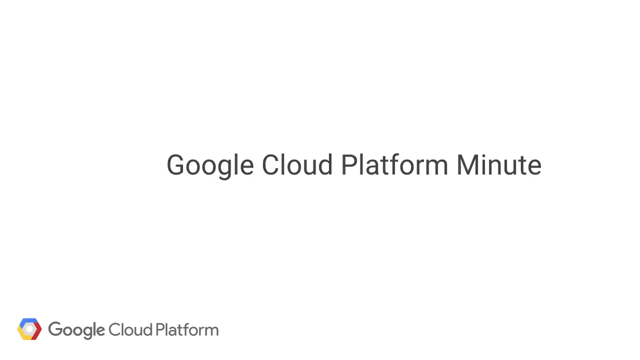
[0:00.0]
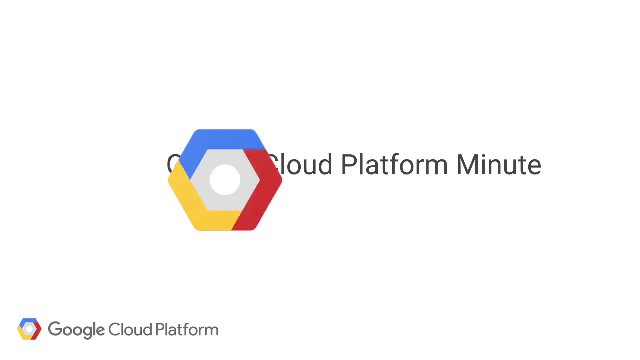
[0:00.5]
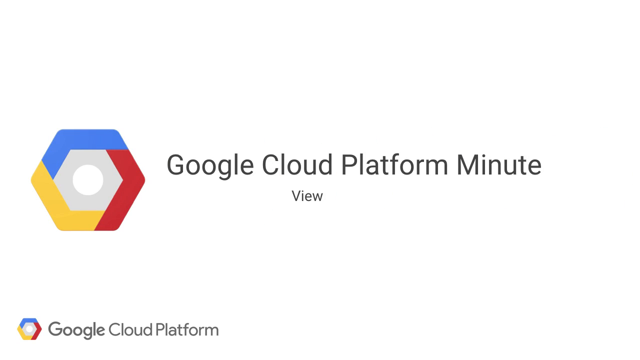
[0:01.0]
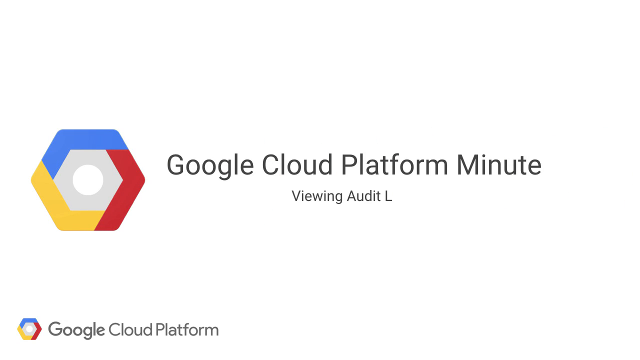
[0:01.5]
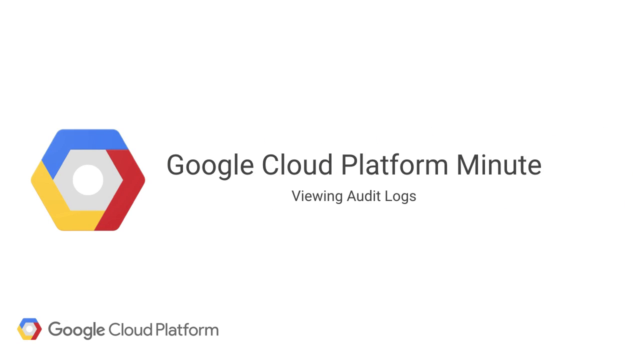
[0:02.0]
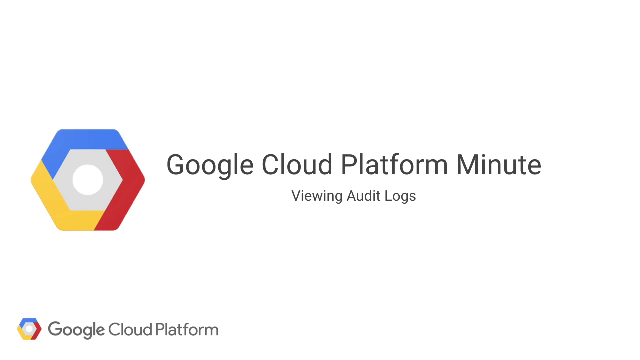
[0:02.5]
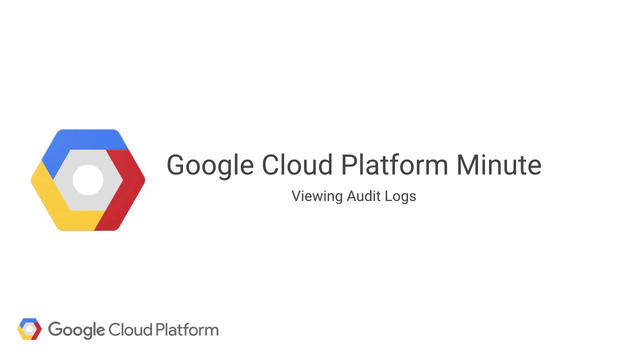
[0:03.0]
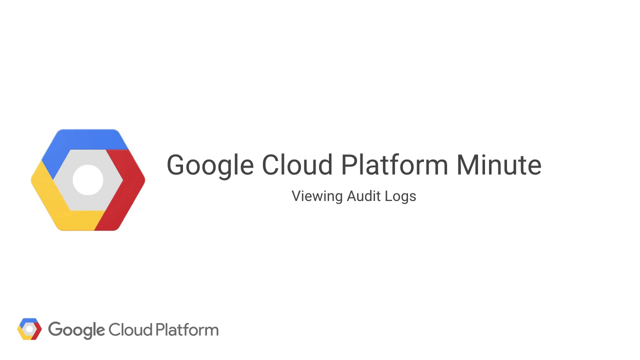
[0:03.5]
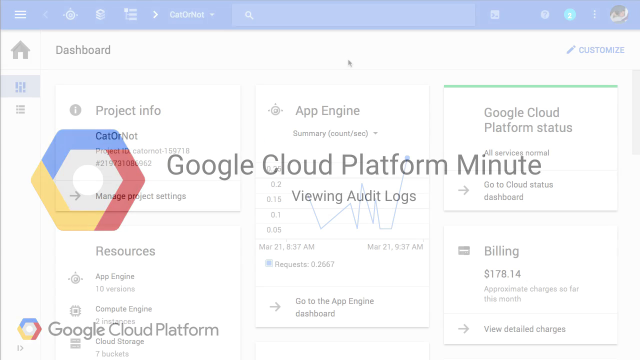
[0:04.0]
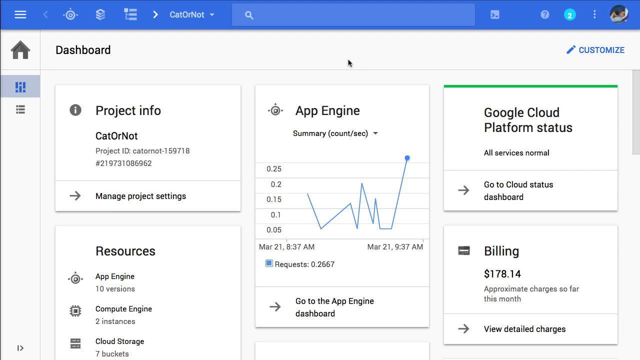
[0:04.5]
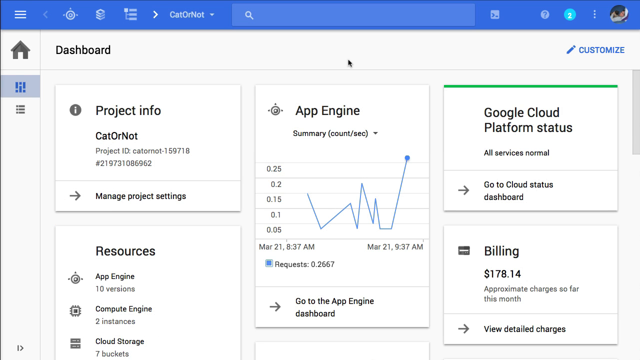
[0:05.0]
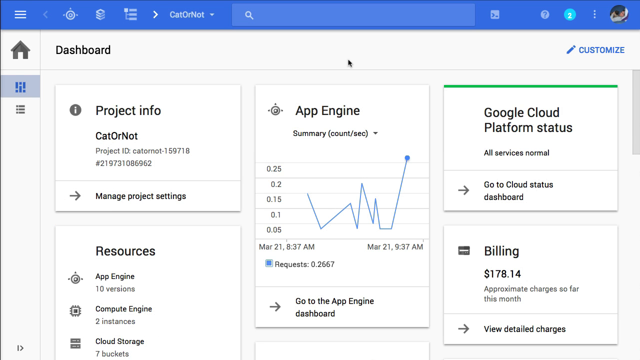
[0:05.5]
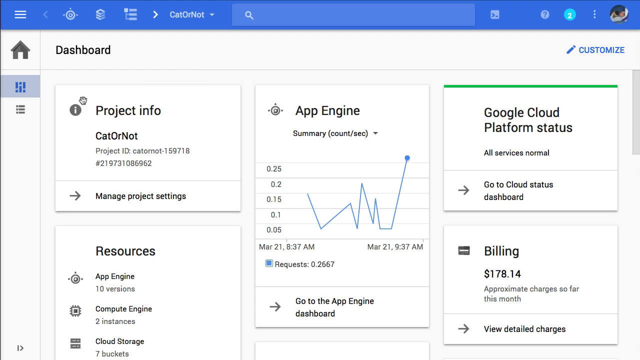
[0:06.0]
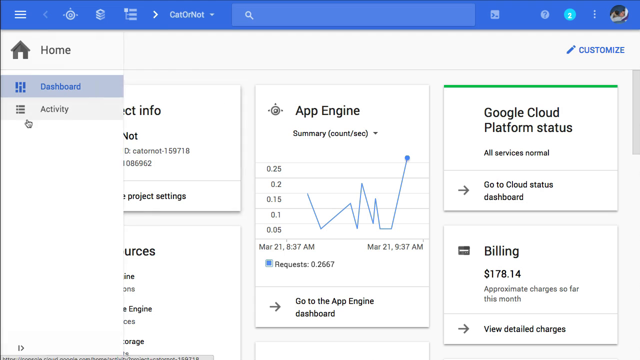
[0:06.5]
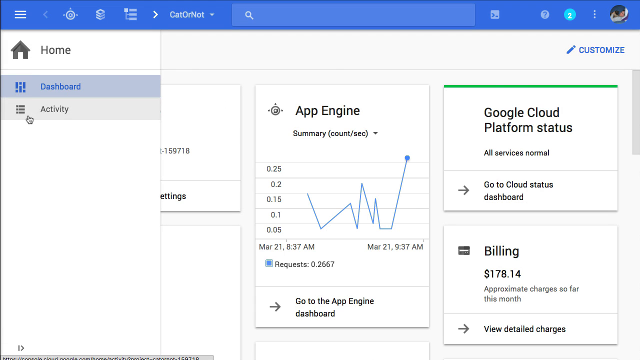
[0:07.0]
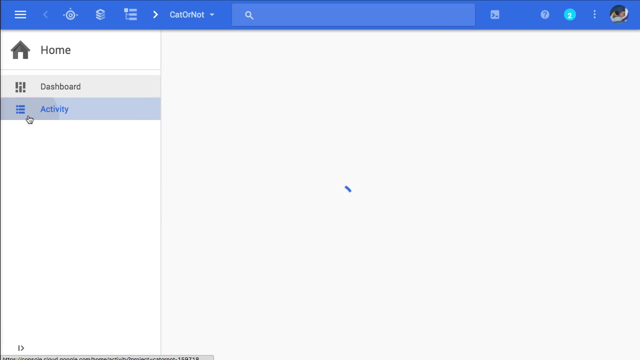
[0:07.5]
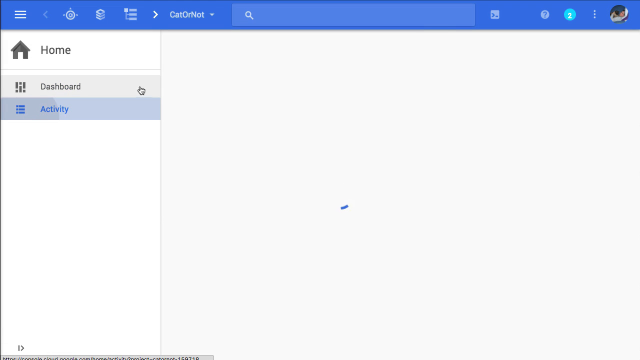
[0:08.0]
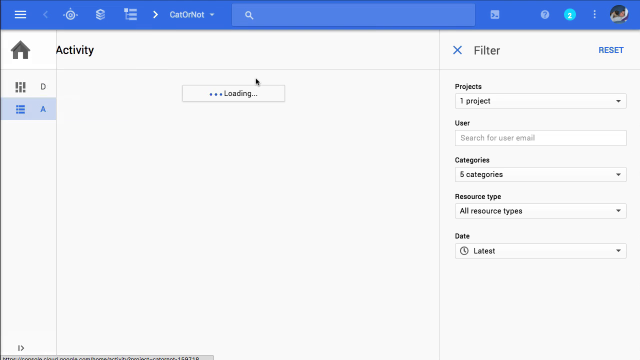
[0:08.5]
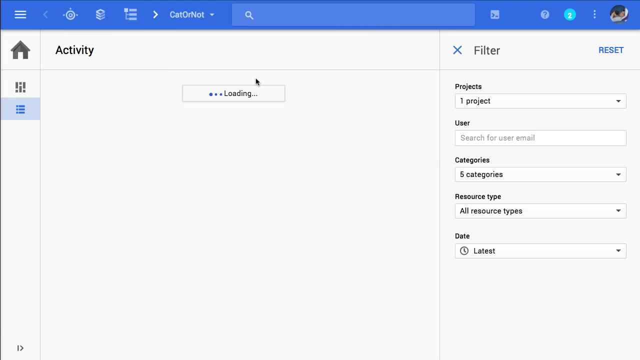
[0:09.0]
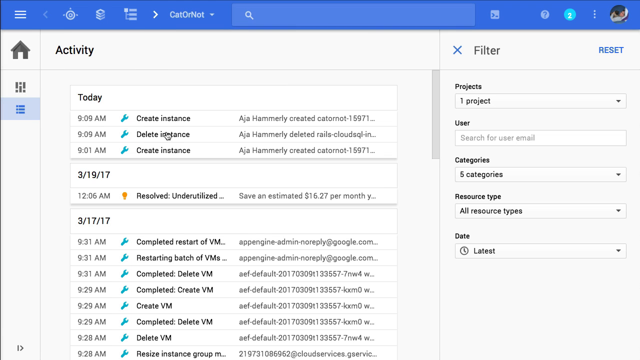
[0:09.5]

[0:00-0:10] A local cloud platform is shown, with the different categories available on it, apparently to demonstrate how the platform is used and operated. Items for projects, the app, the cloud platform, a dashboard and activity appear.